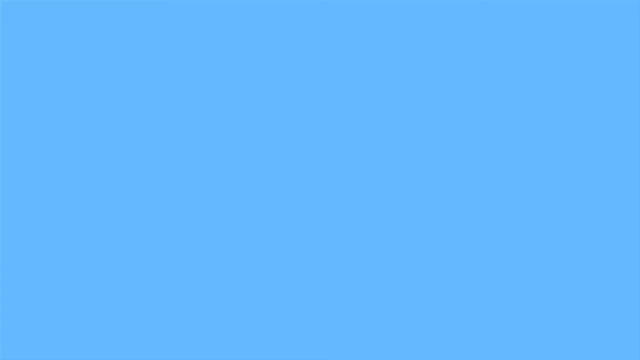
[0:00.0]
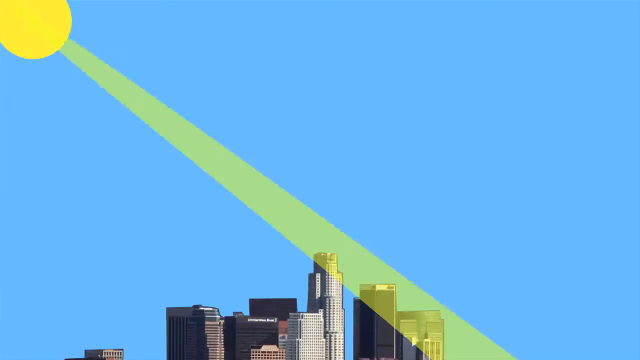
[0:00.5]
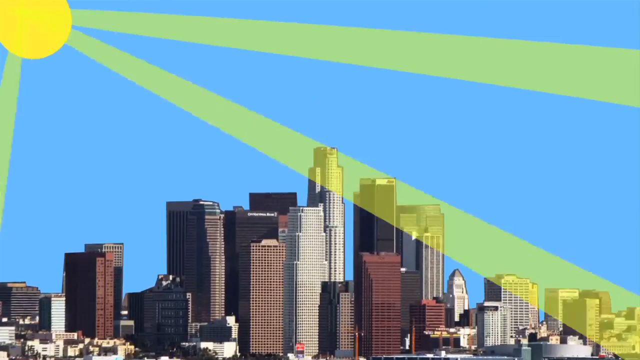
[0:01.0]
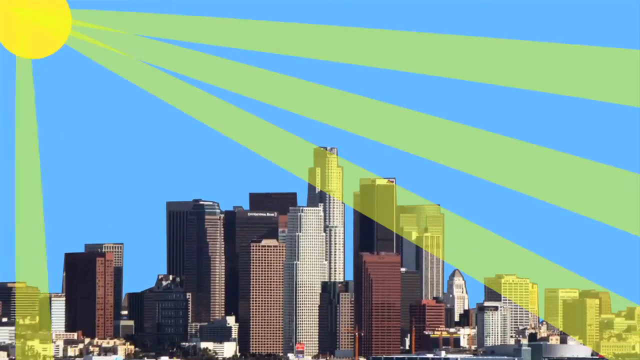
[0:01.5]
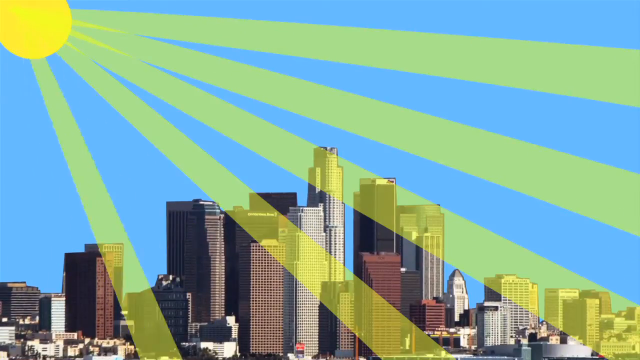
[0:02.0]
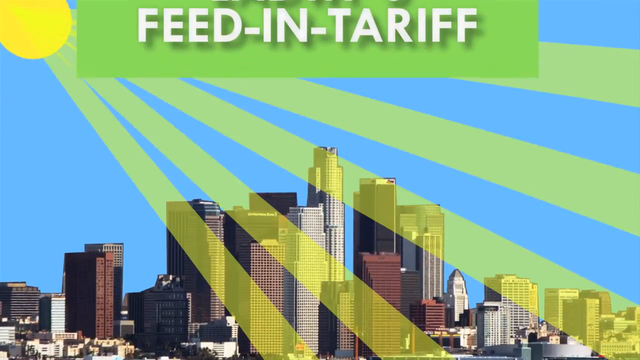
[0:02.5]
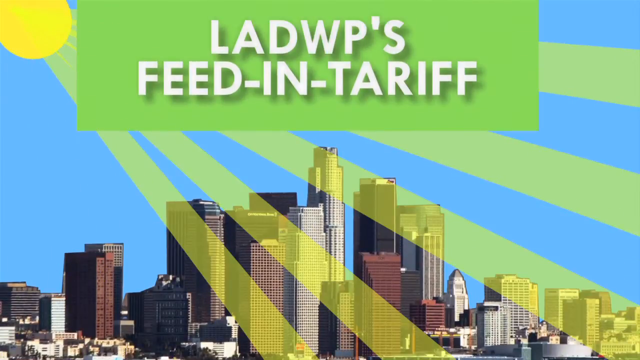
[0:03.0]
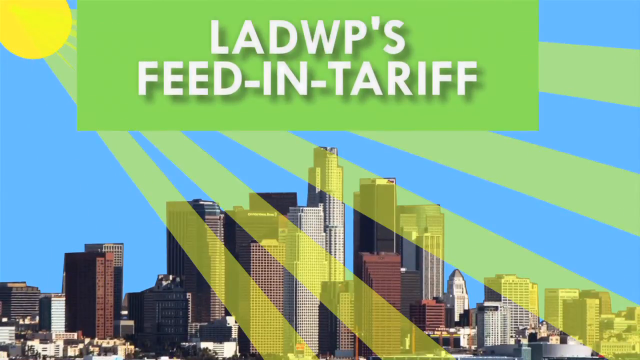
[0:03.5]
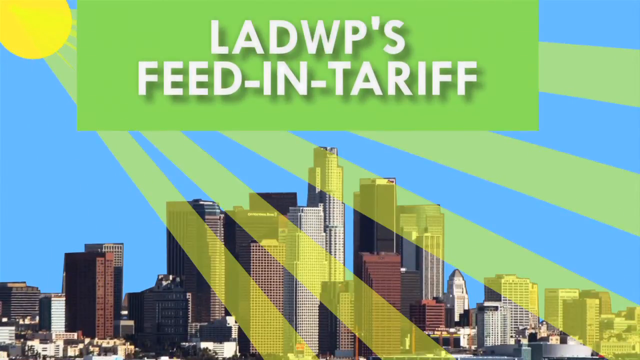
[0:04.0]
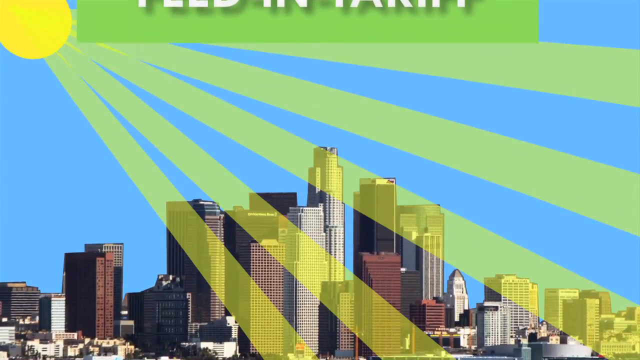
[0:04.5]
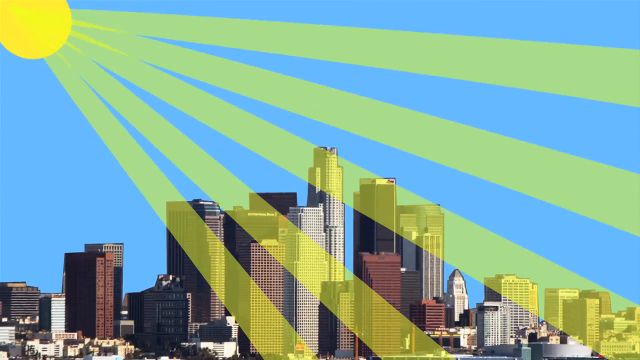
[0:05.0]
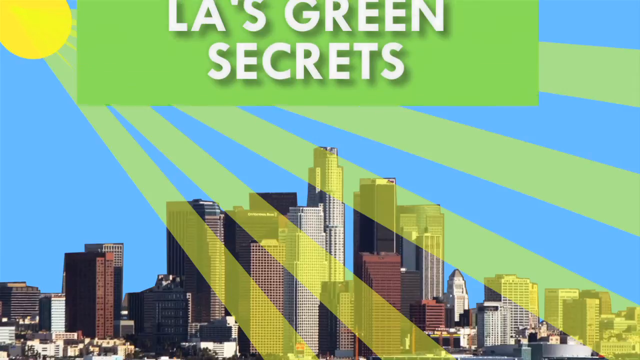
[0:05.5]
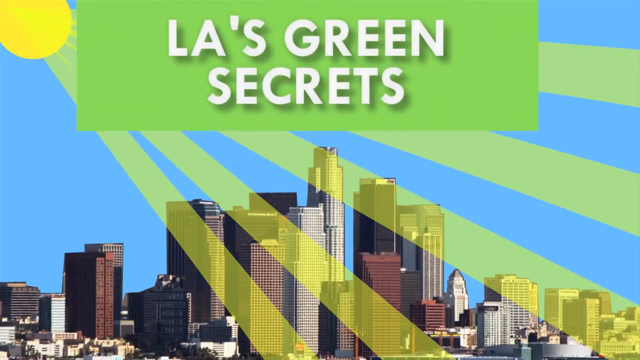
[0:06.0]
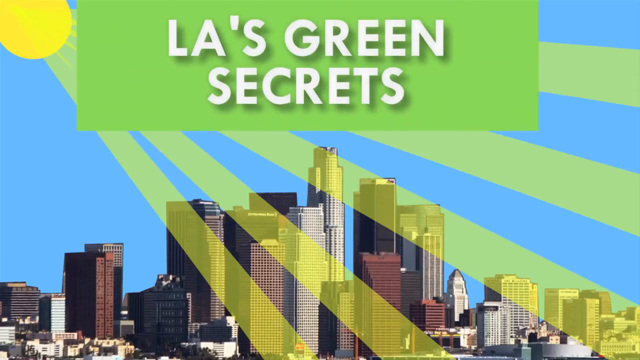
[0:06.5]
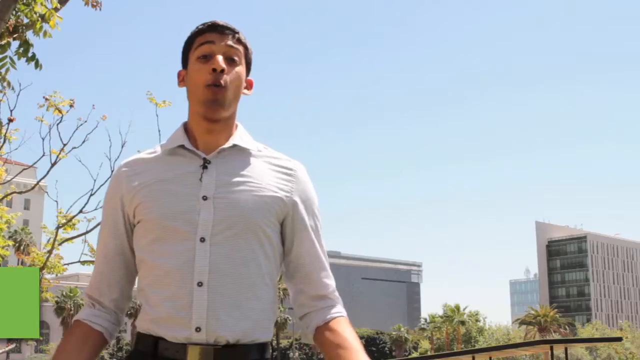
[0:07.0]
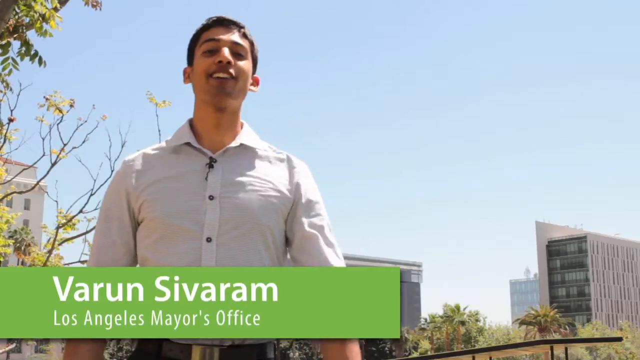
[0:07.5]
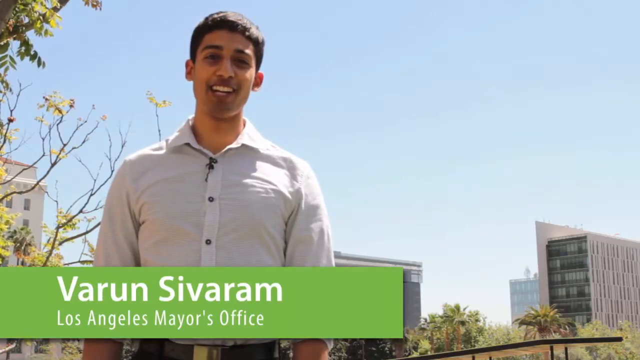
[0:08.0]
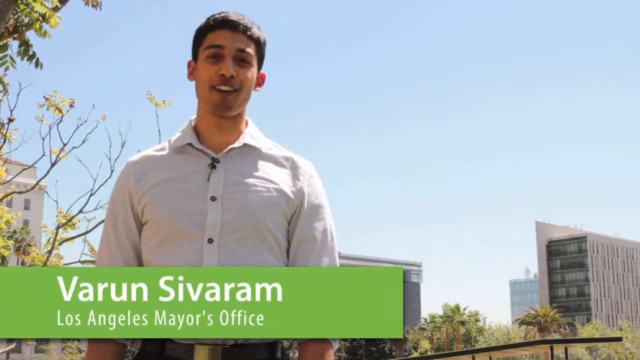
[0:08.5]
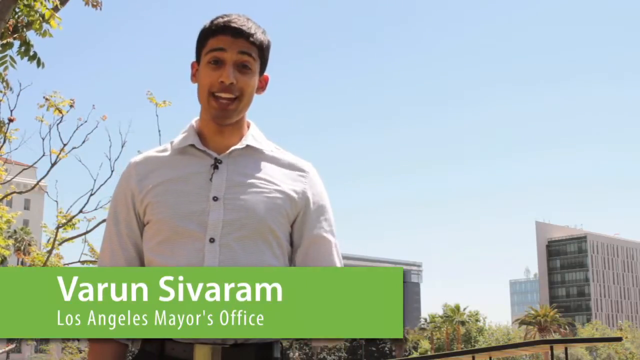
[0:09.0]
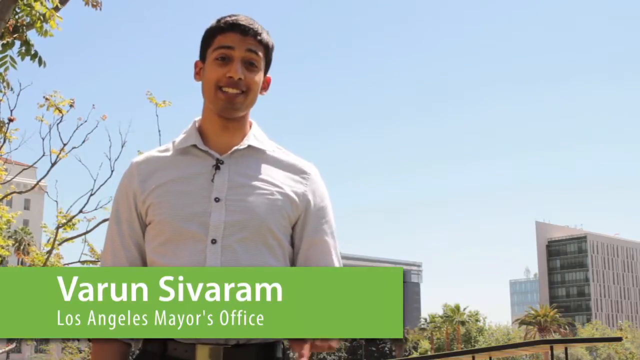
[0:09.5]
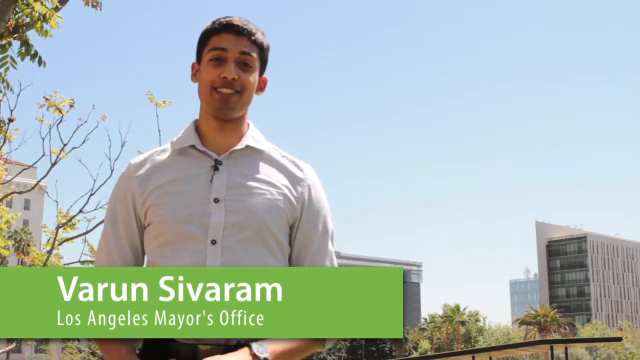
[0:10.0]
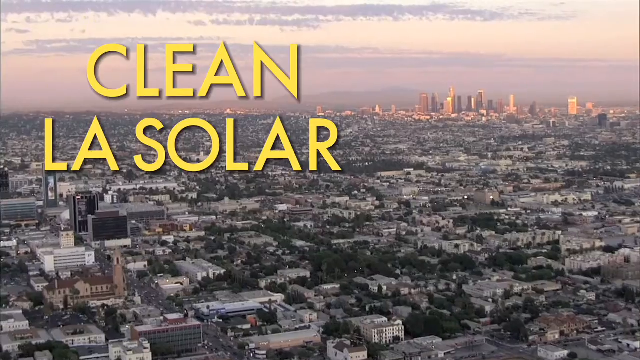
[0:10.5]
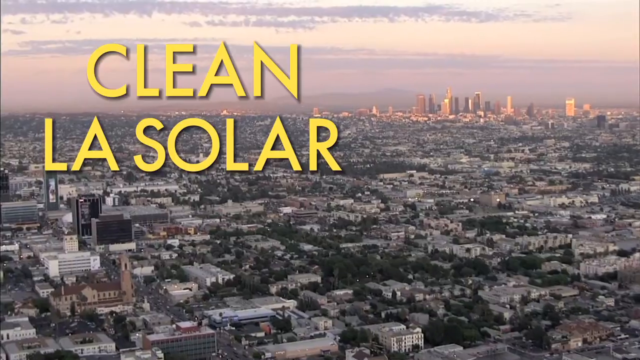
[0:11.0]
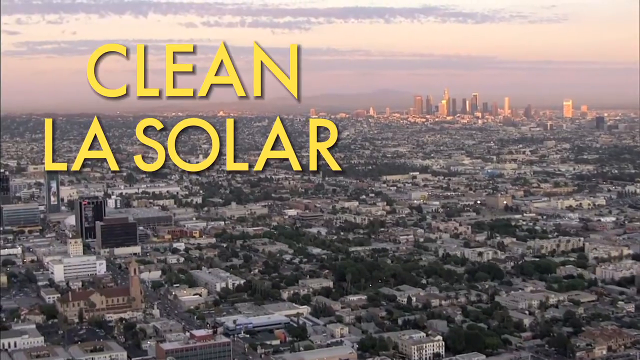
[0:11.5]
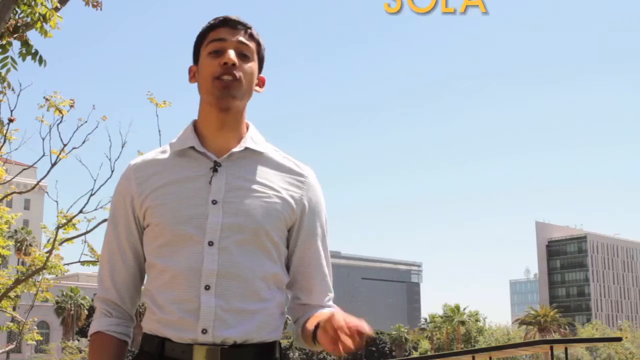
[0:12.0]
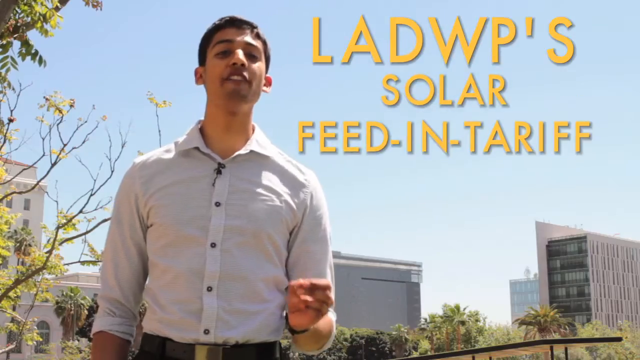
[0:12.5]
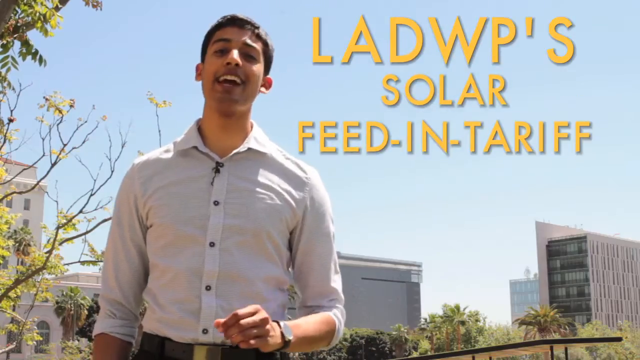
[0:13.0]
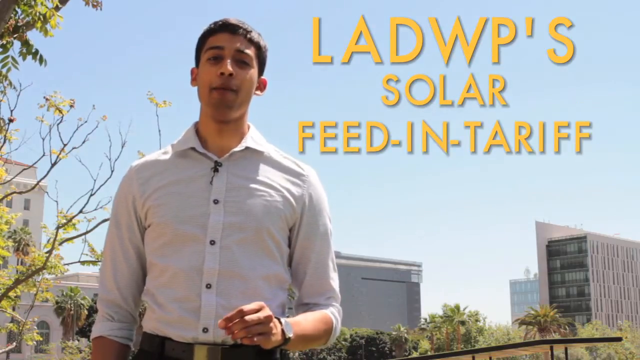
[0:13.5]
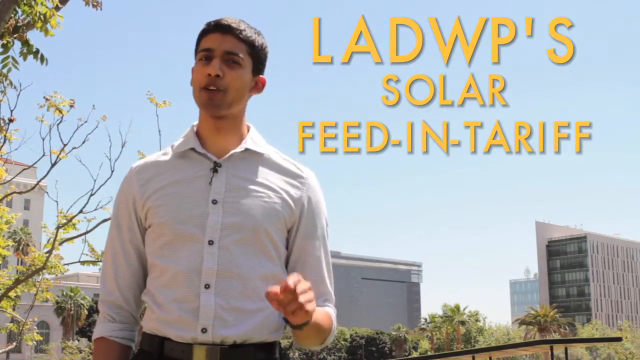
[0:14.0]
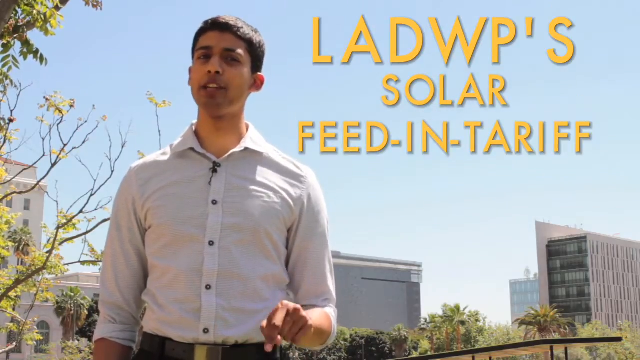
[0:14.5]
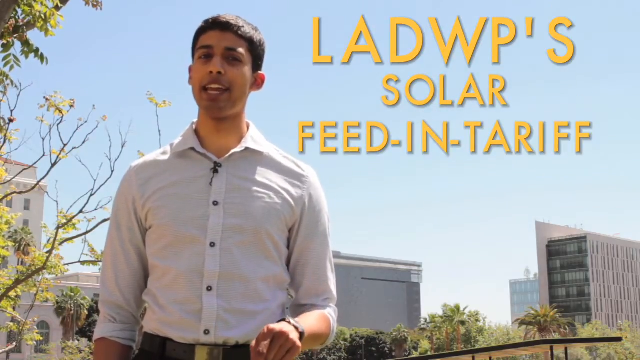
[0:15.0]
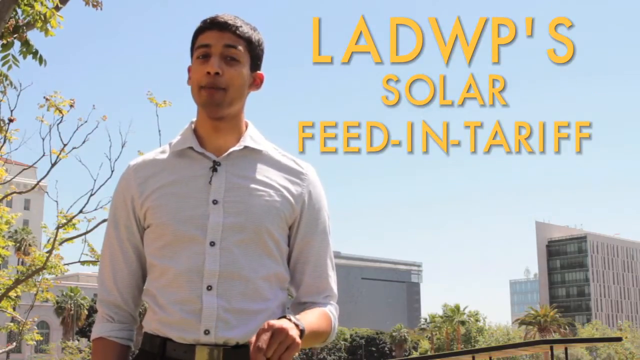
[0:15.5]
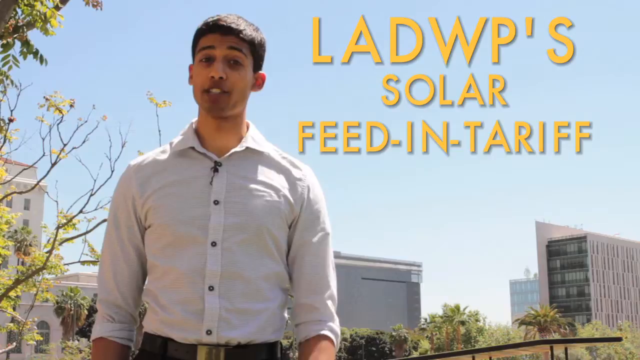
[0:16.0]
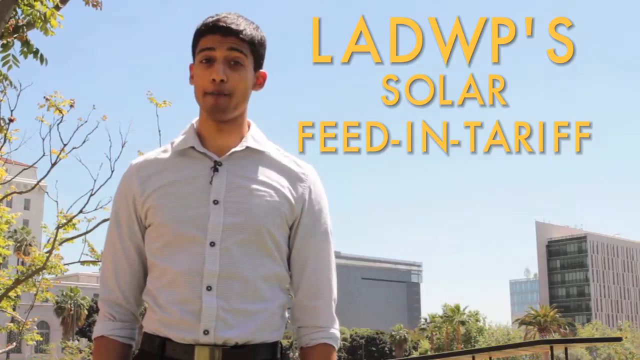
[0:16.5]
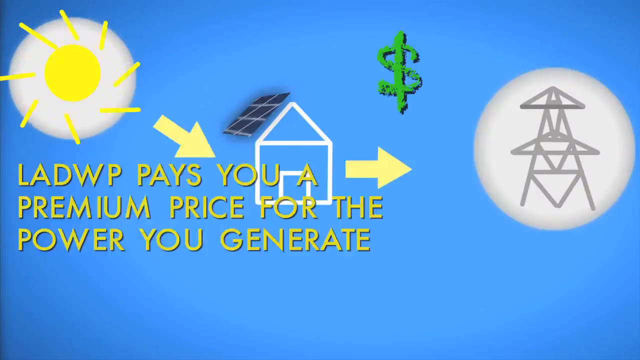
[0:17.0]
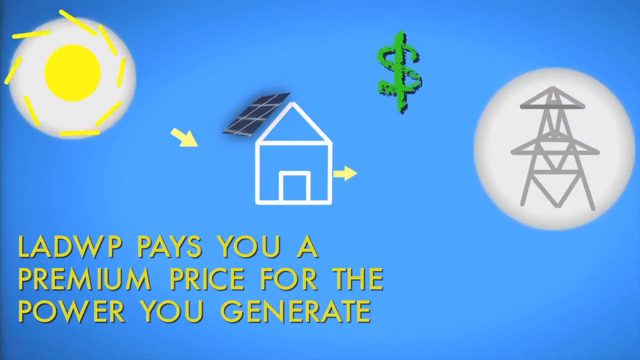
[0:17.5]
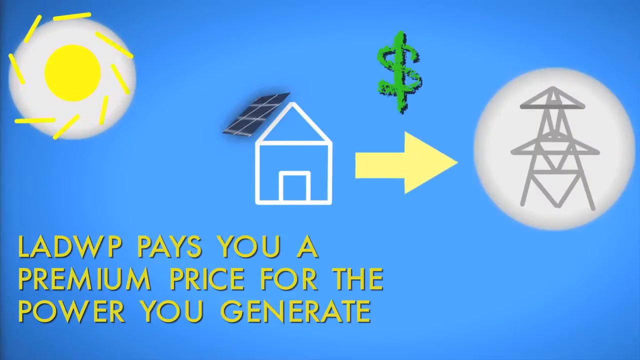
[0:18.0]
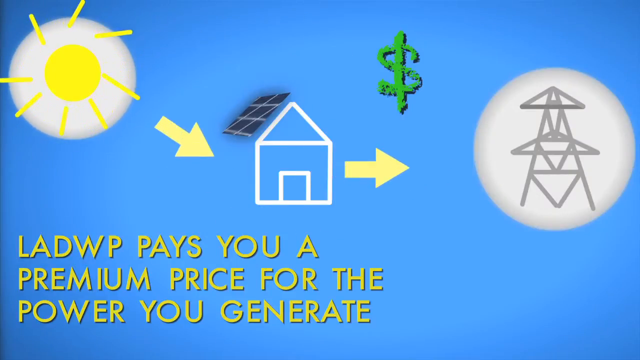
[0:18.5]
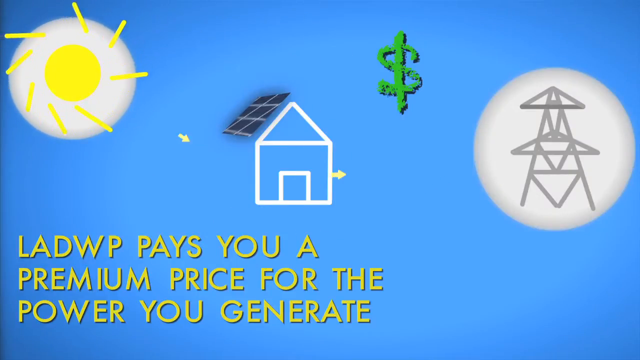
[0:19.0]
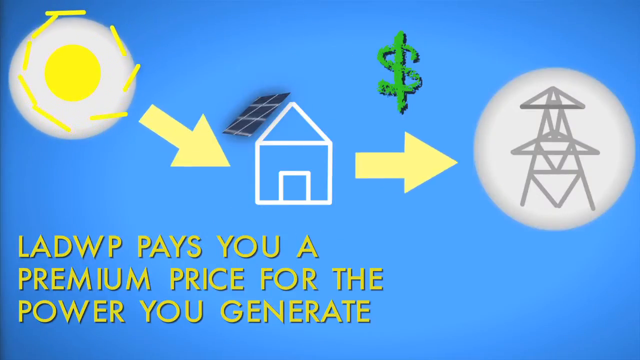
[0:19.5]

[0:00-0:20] The video opens with a picture of the New York skyline sliding from bottom to top against a white and blue background, kind of symbolizing the sky. In the very top left corner is a cartoon-like, almost animated sun, with five sun rays reaching from the left corner all the way to the right side of the picture. A green box slides up from the bottom, covering about a third of the screen, with text ending "feed in tariff"; it disappears, then slides in again with text beginning "LA's green". A man then starts to speak.